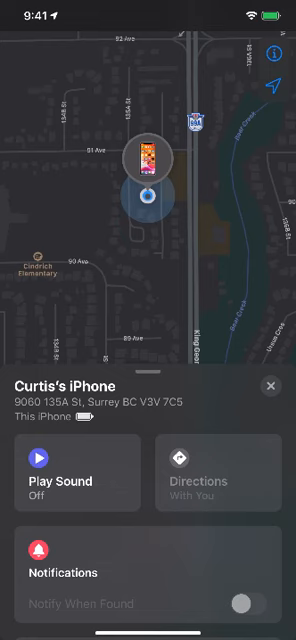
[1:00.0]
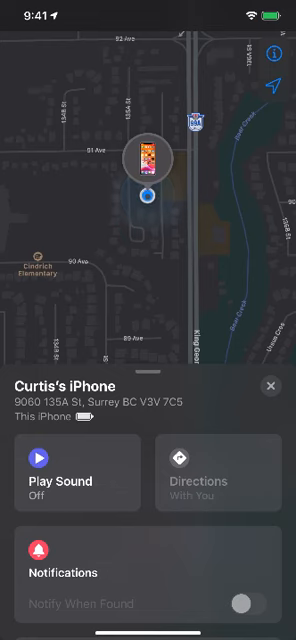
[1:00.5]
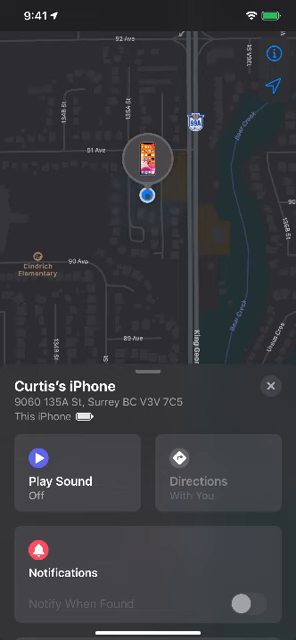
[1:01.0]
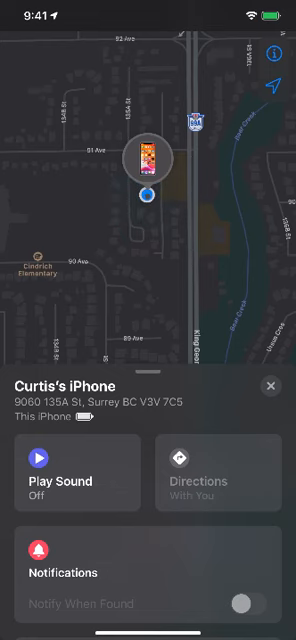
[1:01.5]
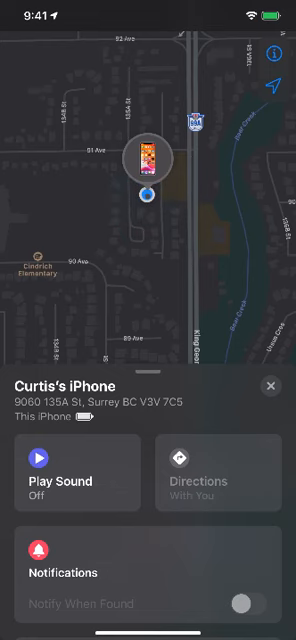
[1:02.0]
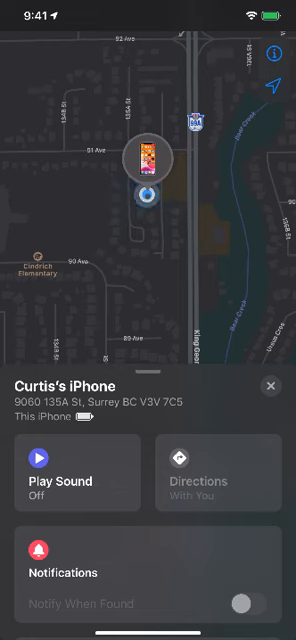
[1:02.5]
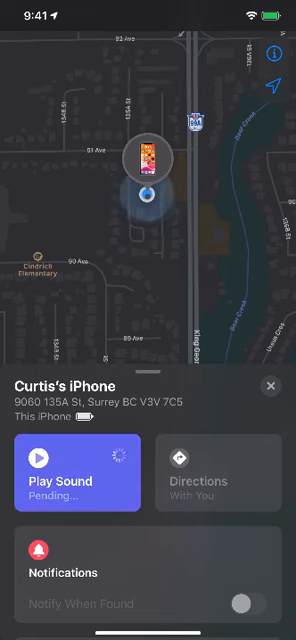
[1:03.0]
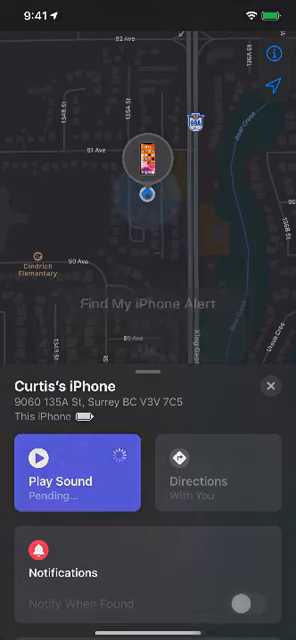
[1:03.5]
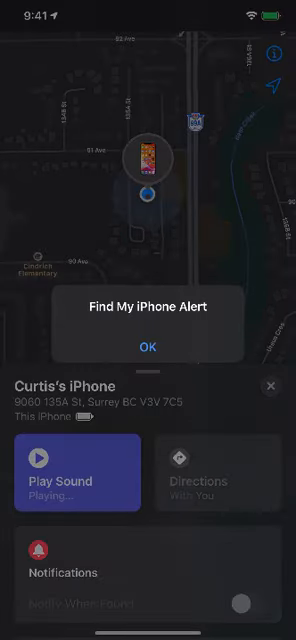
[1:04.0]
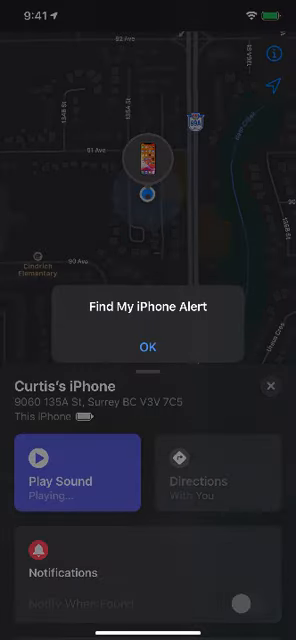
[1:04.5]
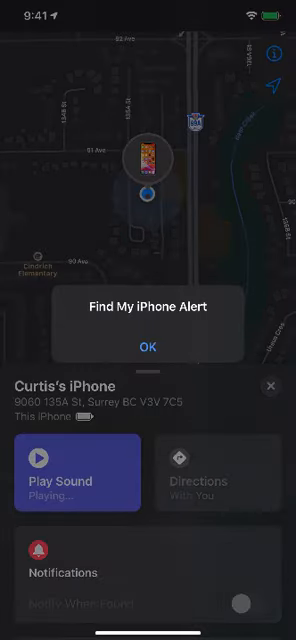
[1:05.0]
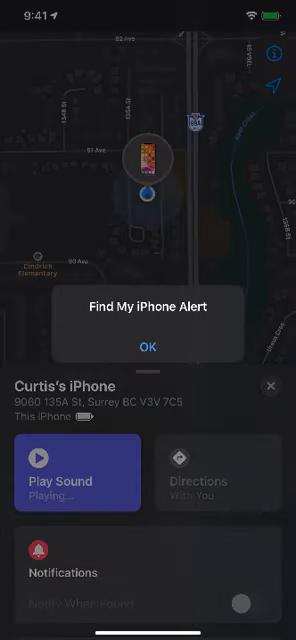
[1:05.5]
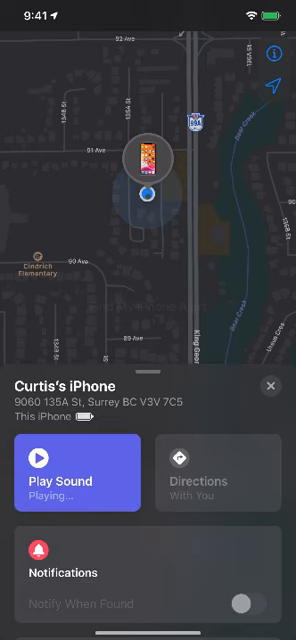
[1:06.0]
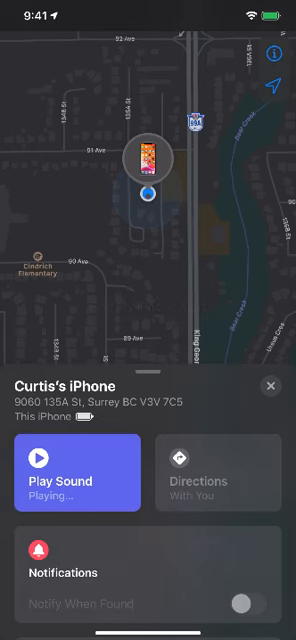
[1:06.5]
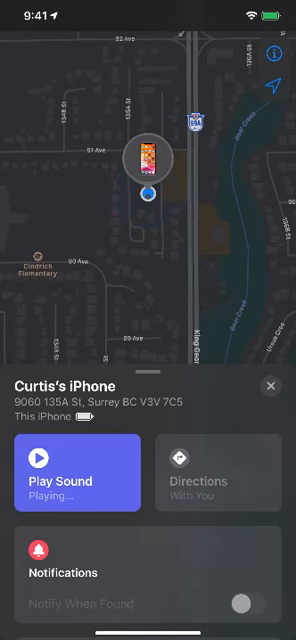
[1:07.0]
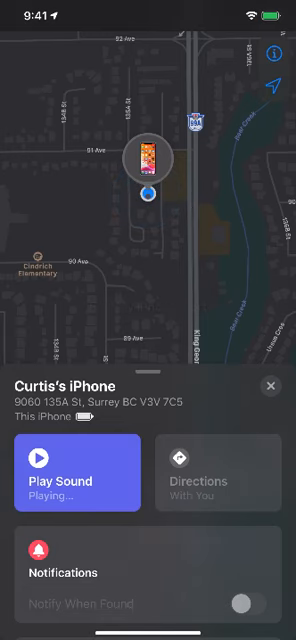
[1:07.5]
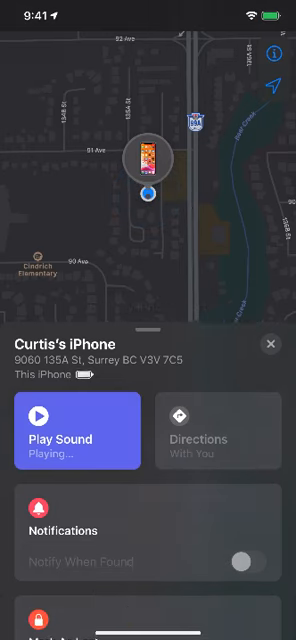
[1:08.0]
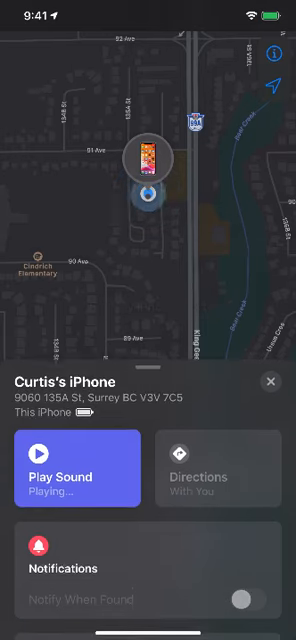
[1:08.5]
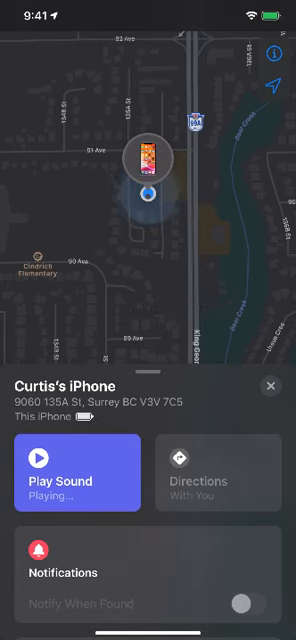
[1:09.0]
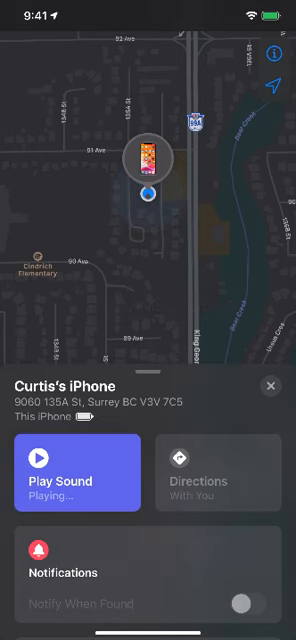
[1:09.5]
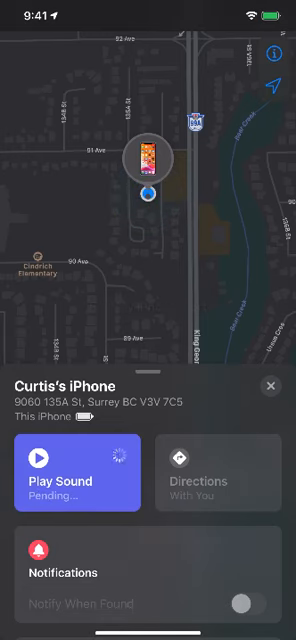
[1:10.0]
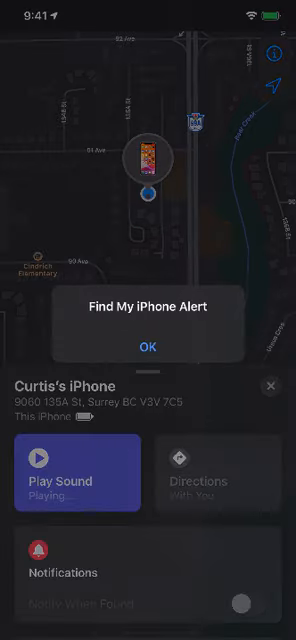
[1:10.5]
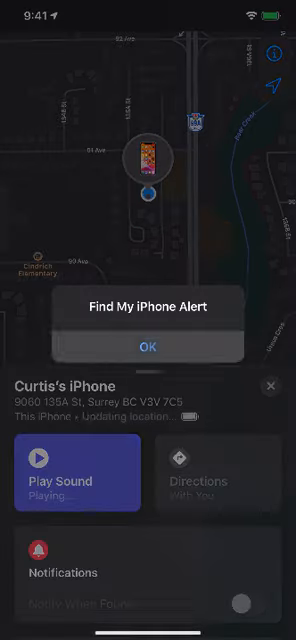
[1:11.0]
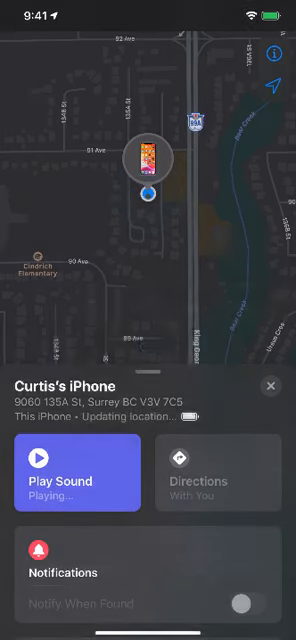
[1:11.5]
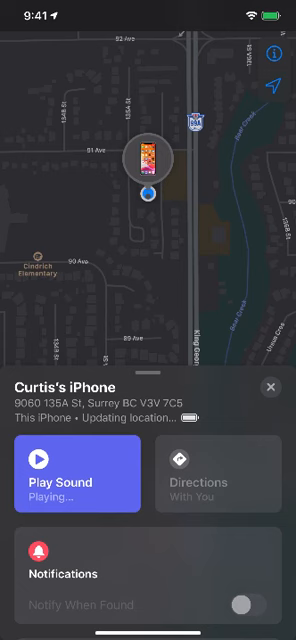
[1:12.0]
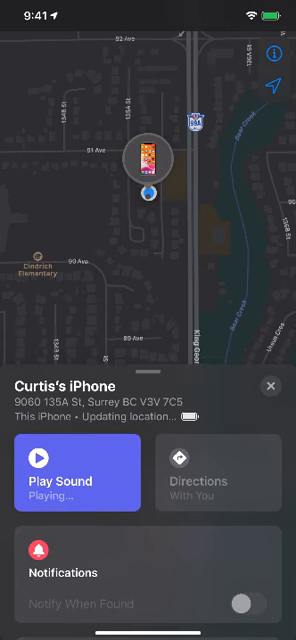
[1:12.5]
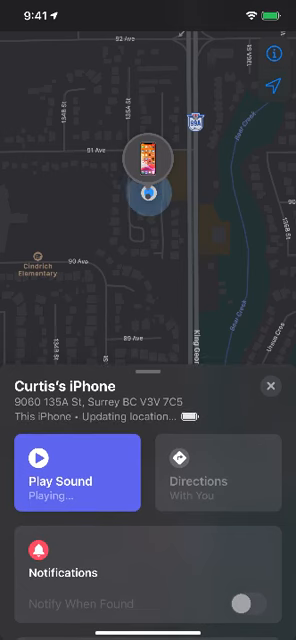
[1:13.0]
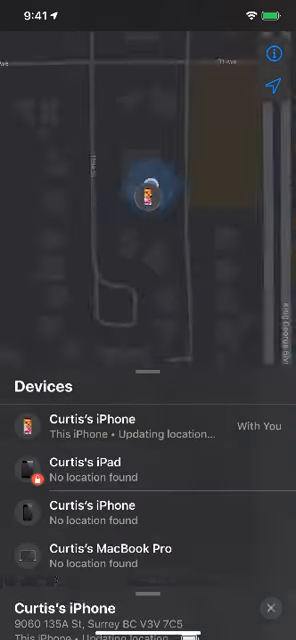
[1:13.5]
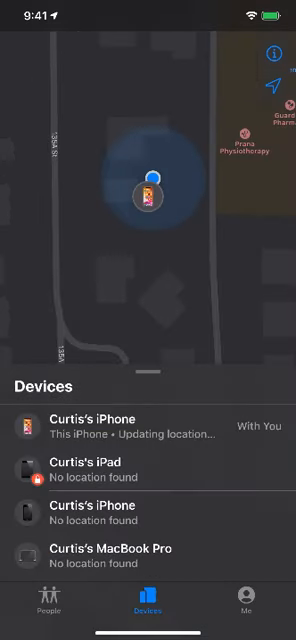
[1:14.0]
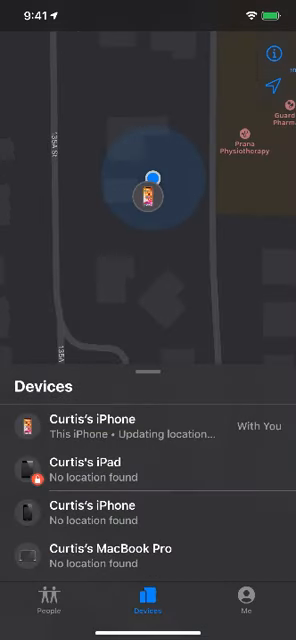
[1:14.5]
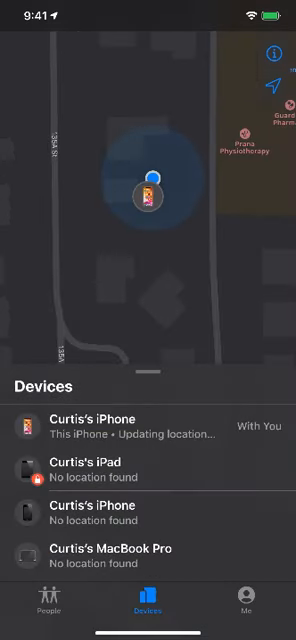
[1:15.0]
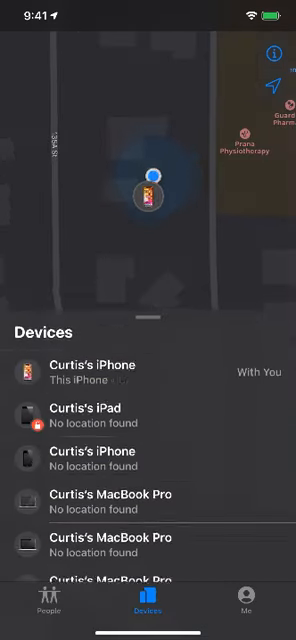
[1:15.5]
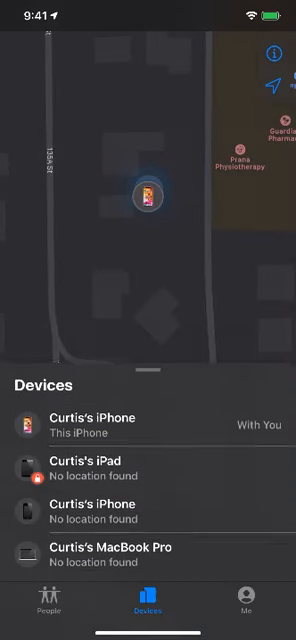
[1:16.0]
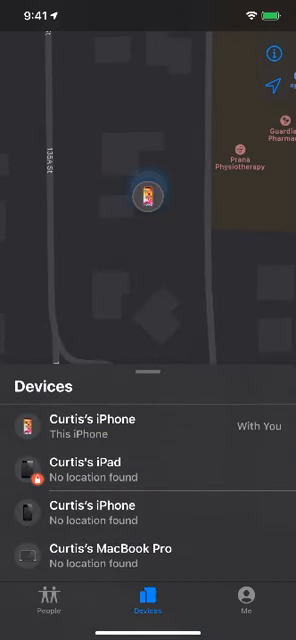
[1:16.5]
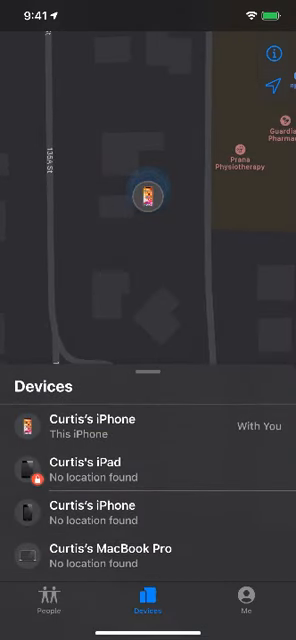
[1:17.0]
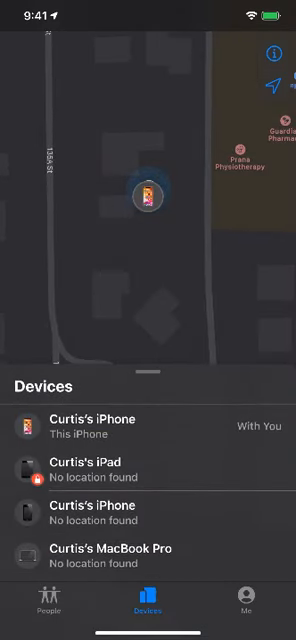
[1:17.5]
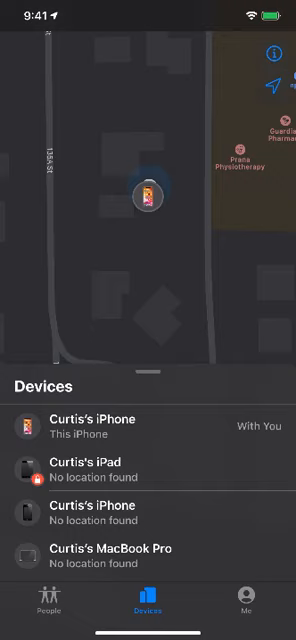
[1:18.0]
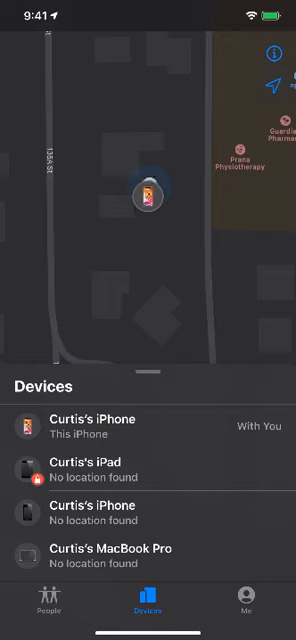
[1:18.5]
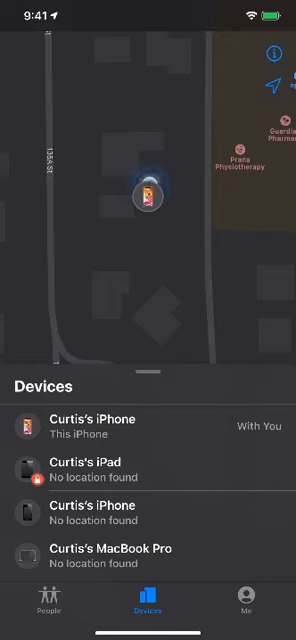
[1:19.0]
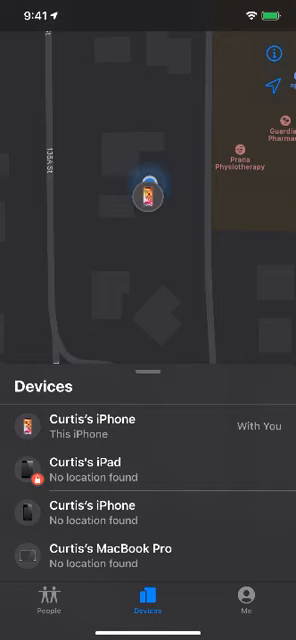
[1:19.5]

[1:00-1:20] The Find My app is open on an iPhone with Curtis's iPhone selected. At the very bottom, the iPhone named Curtis's iPhone is shown at the address "9060-135A St. Soray, B.C. V3V7C5". Below that information are various buttons: play sound, set to off; directions, which reads "with you"; and notifications, with a toggle set to the left side, meaning off. The user taps play sound, which opens a pop-up reading "find my iPhone alert" with an "okay" button. The user presses okay, and the text under play sound reads "play", apparently indicating a sound is playing. The top half of the screen shows a map with the iPhone's location. The user taps the play sound button again, which changes the text to "playing" and opens a window that just says okay; the user hits okay right away and it closes. The user then zooms in on the map and unselects Curtis's iPhone, which brings up a list of devices: Curtis's iPhone at the top, Curtis's iPad, Curtis's iPhone, Curtis's MacBook Pro and Curtis's MacBook Pro. The user scrolls down briefly on the device list and then back up.